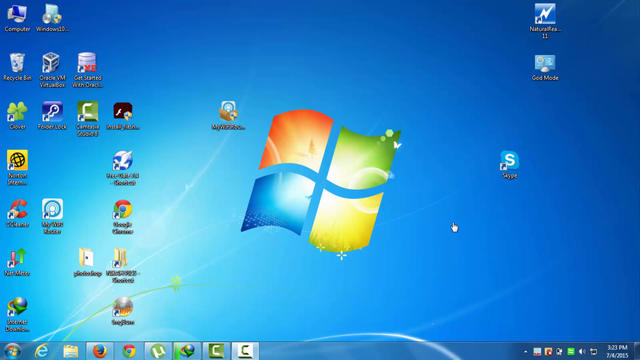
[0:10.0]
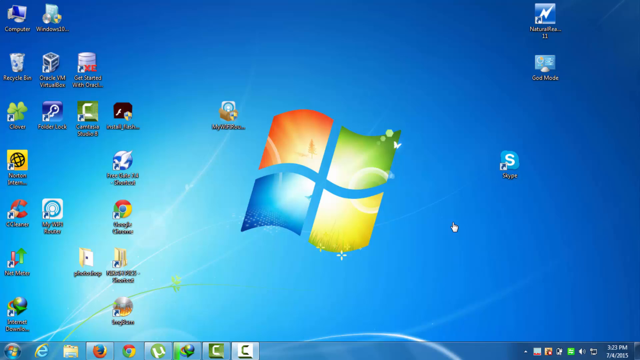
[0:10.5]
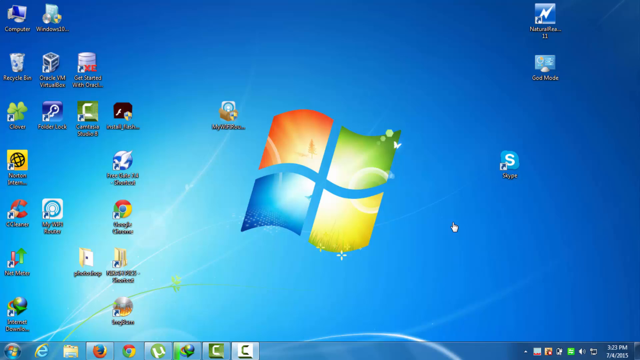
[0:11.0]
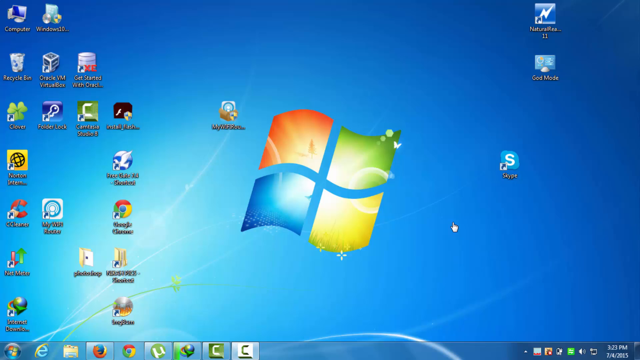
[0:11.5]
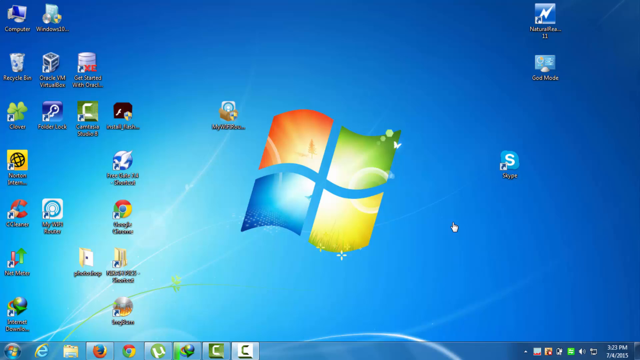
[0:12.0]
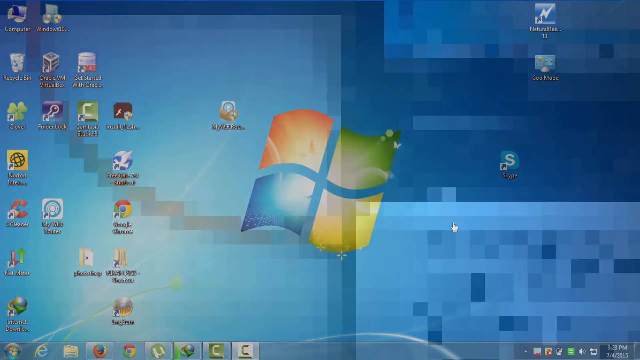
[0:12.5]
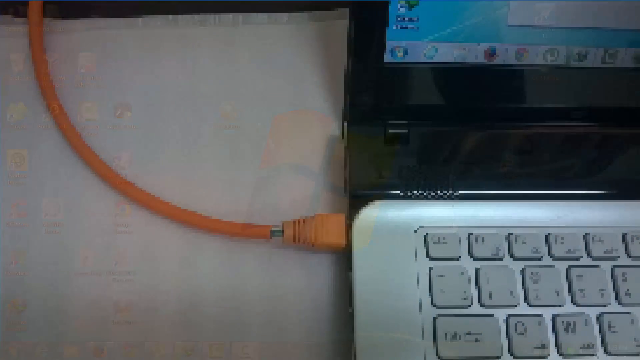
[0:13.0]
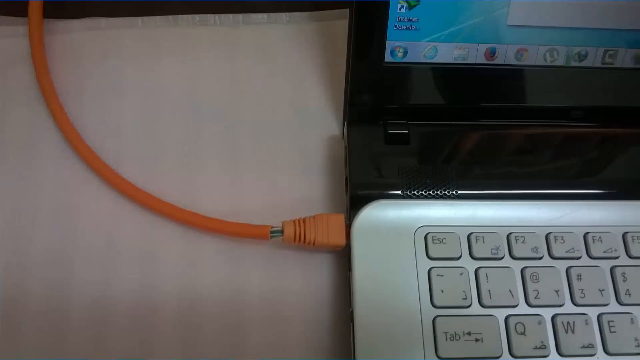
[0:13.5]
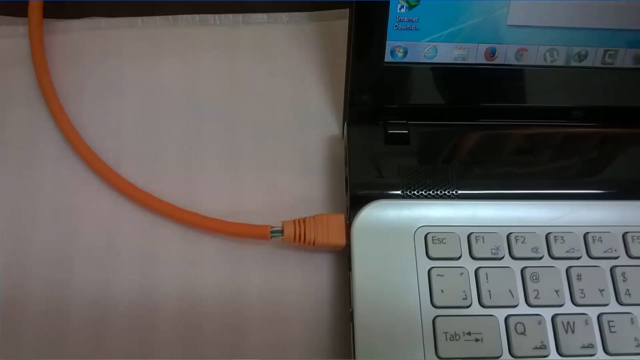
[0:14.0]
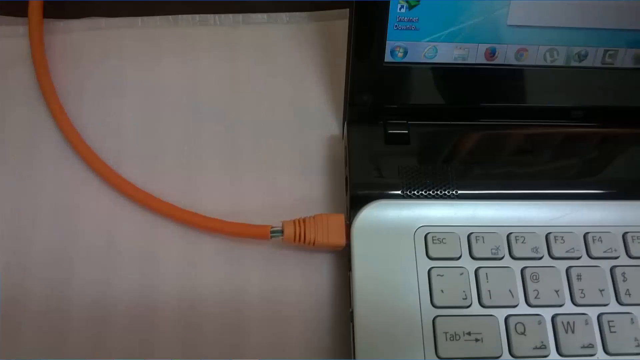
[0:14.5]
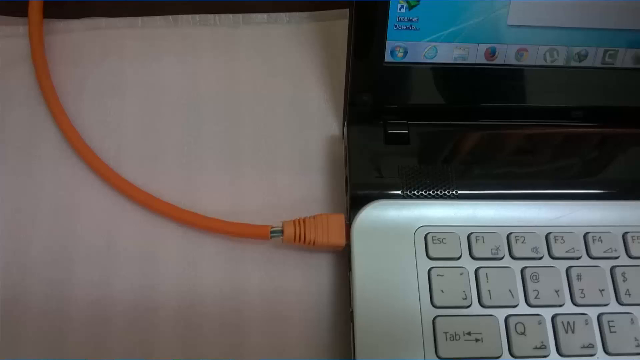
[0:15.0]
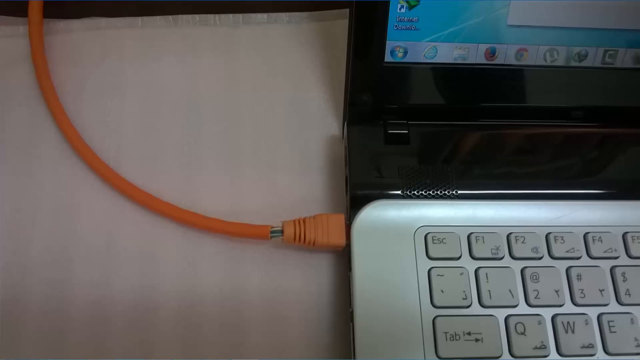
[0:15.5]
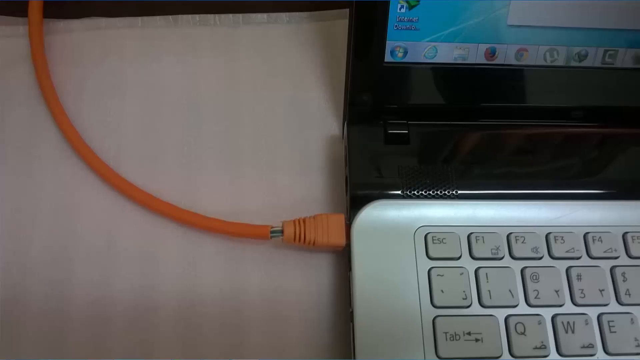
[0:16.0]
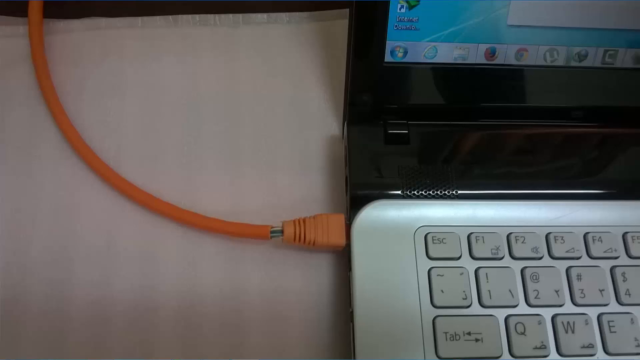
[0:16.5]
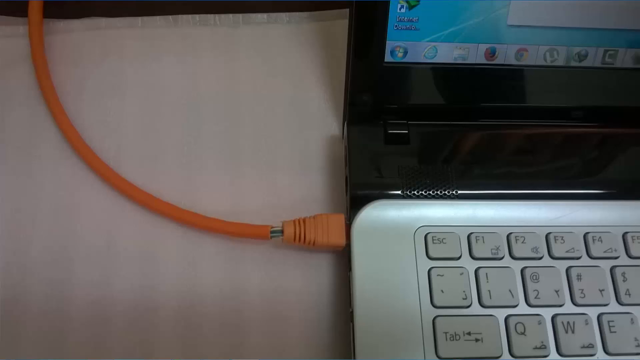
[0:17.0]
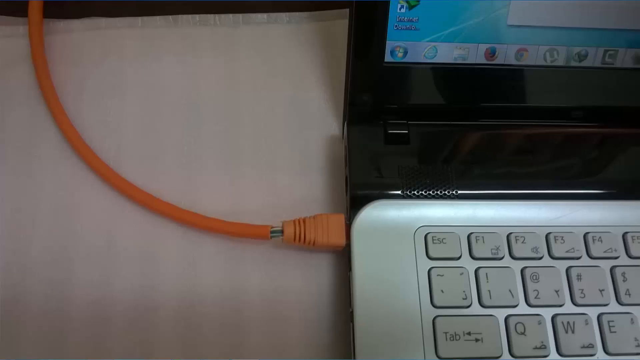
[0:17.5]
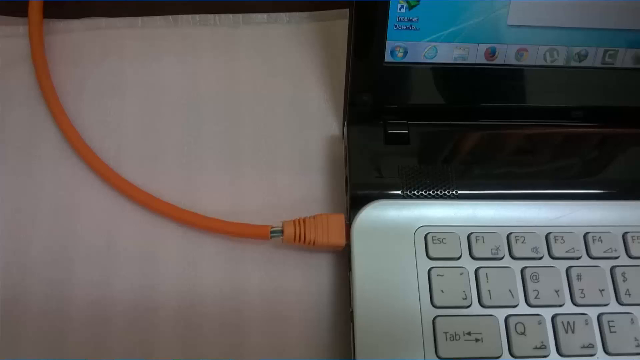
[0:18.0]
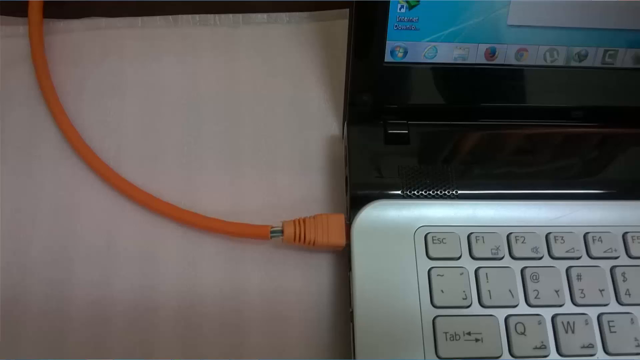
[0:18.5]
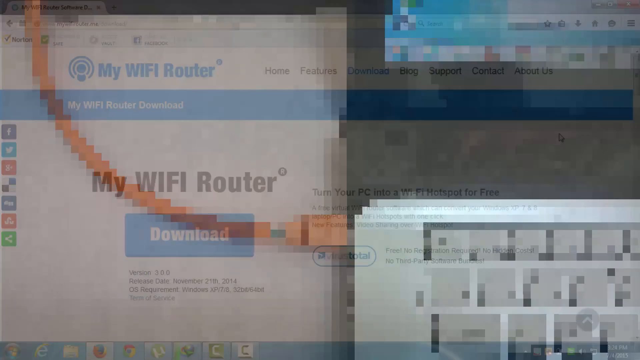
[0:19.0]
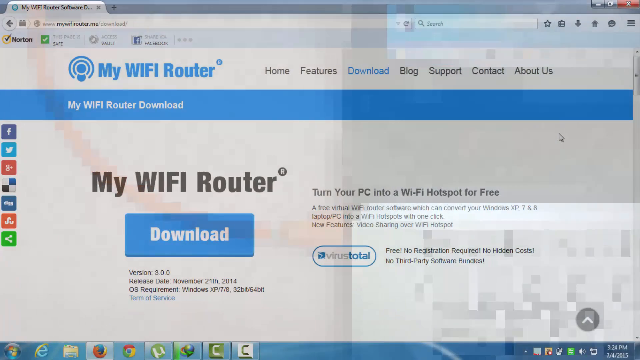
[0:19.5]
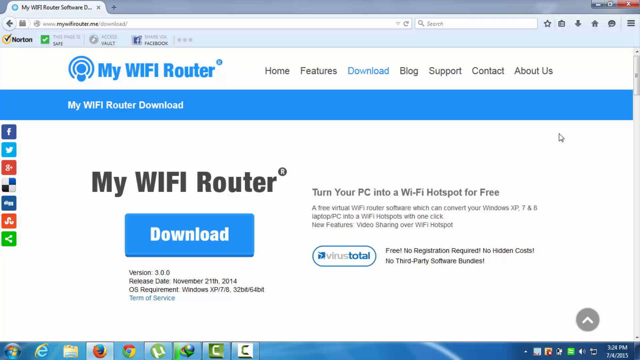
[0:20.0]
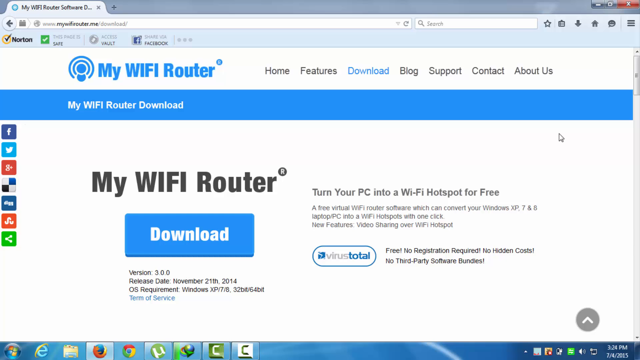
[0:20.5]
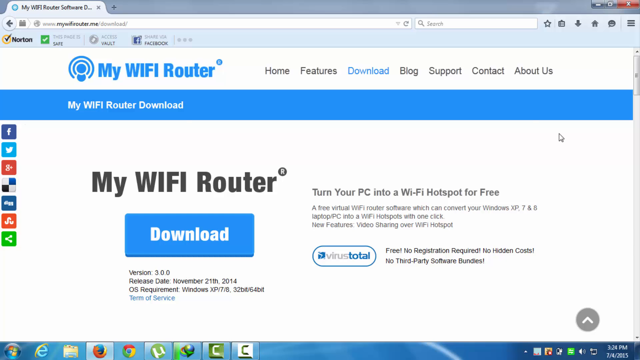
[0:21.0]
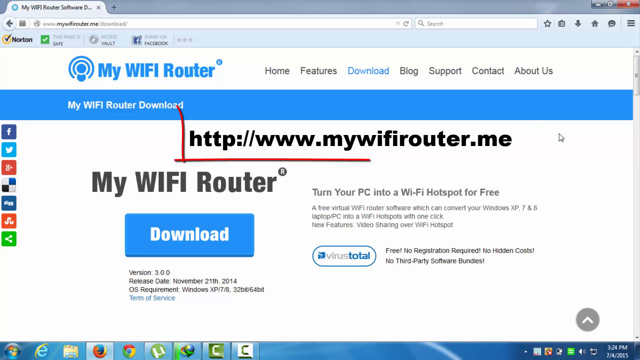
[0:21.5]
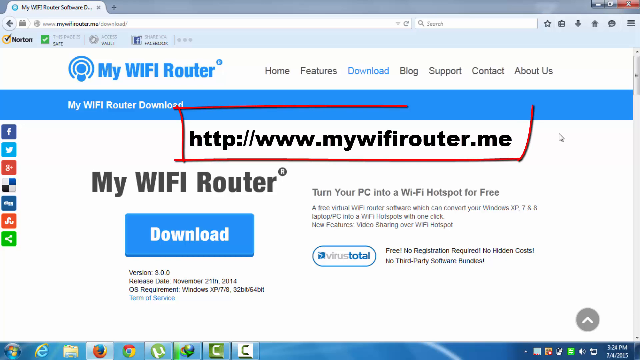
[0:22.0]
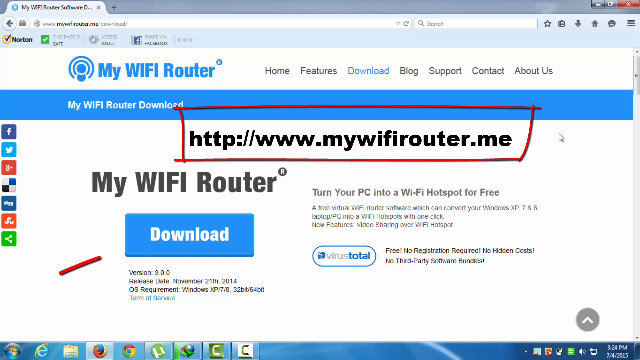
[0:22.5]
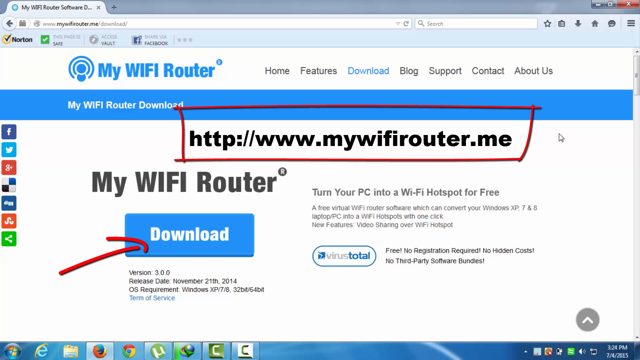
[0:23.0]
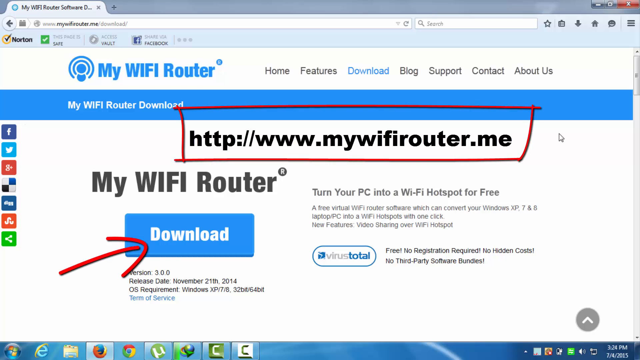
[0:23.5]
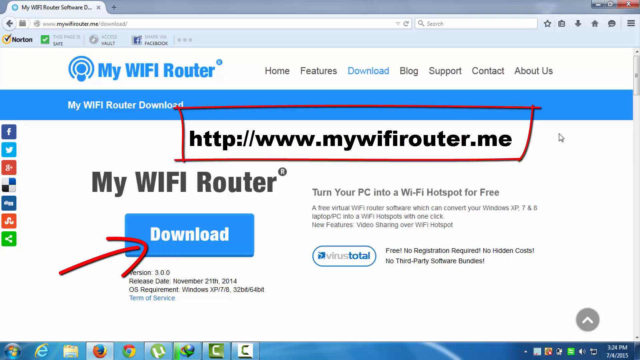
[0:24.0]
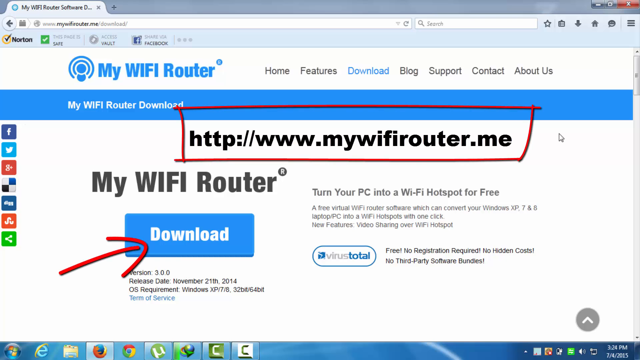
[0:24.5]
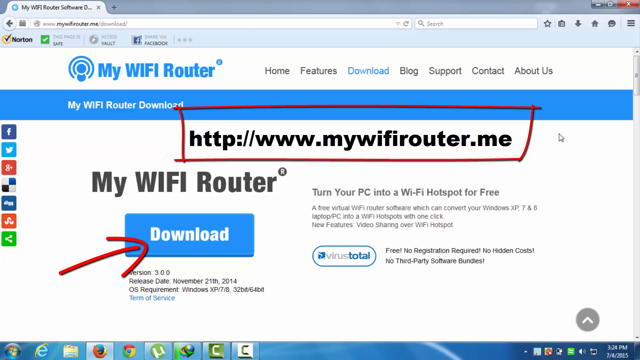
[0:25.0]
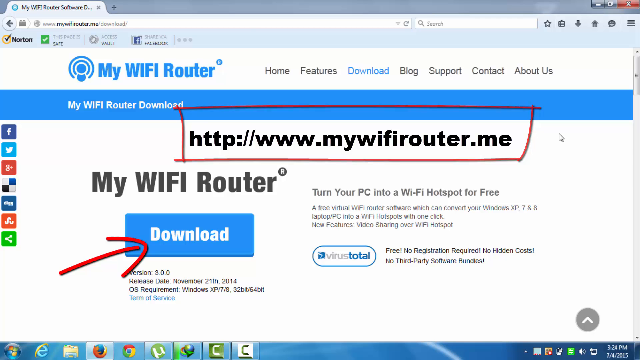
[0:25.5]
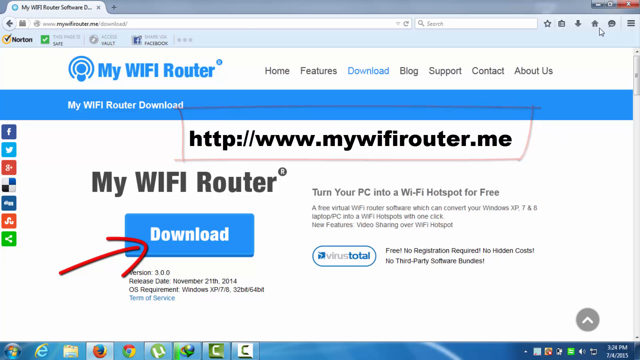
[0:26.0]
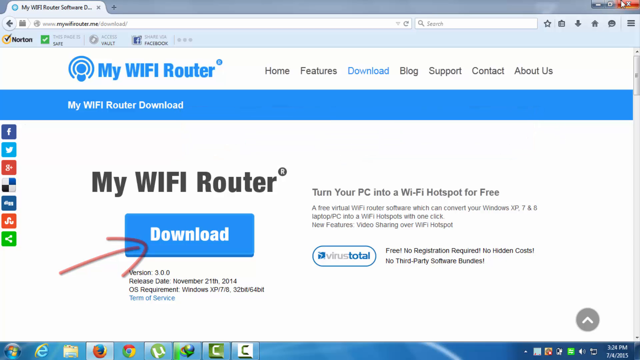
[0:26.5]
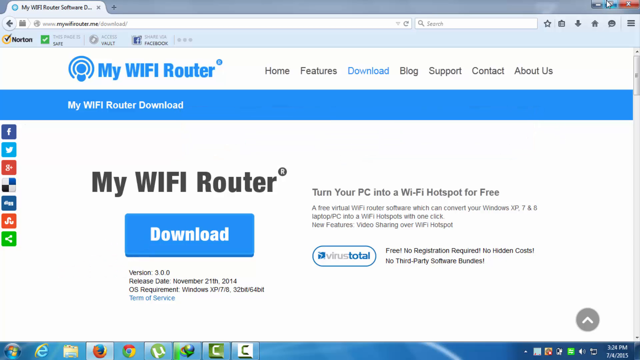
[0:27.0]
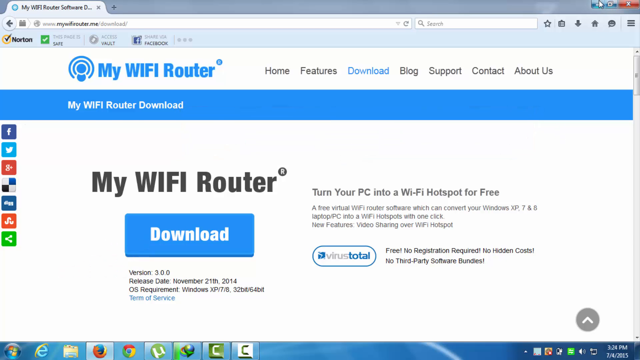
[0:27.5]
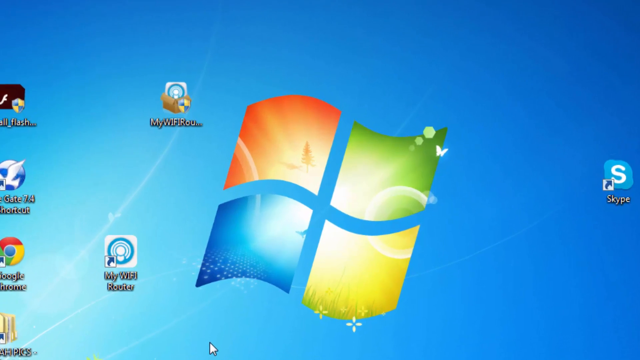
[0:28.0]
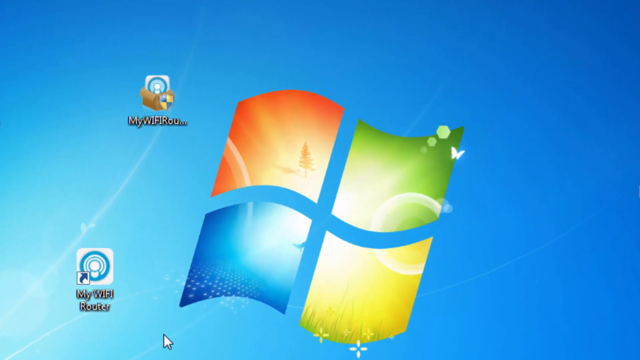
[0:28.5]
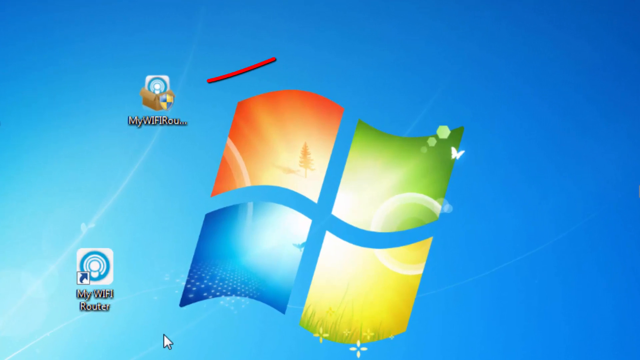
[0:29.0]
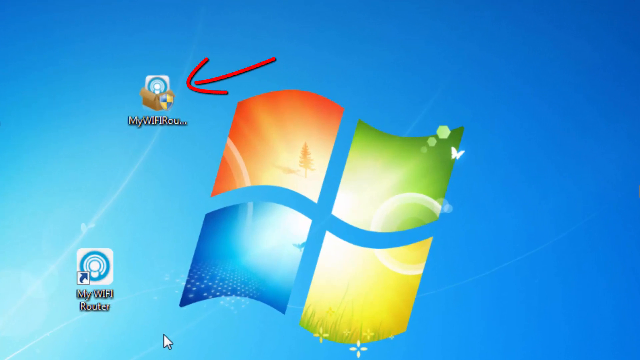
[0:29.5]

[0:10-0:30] A laptop is shown, and software has been downloaded onto it from My Wi-Fi Router. After the download, the application's icon is on the laptop's desktop, but it is not yet installed.